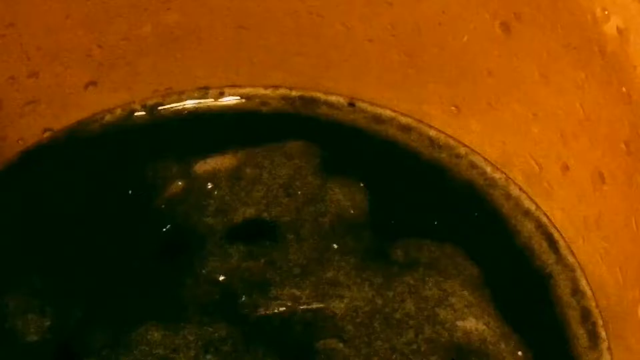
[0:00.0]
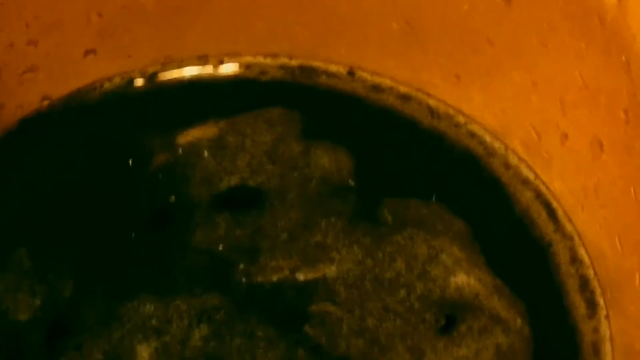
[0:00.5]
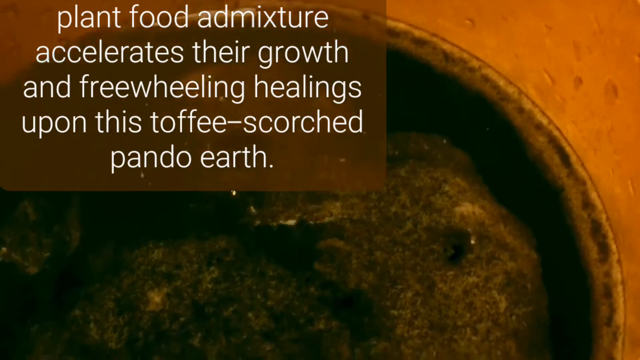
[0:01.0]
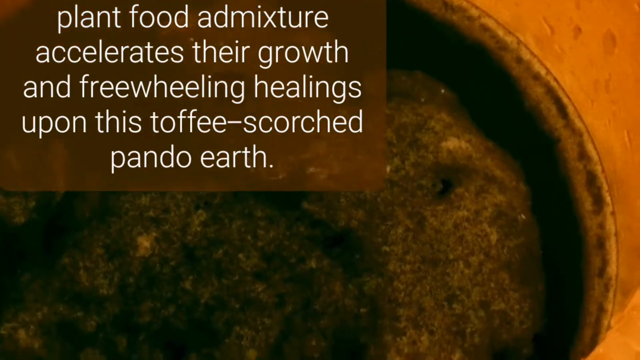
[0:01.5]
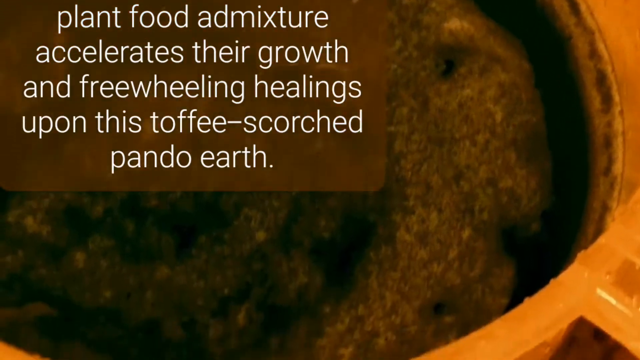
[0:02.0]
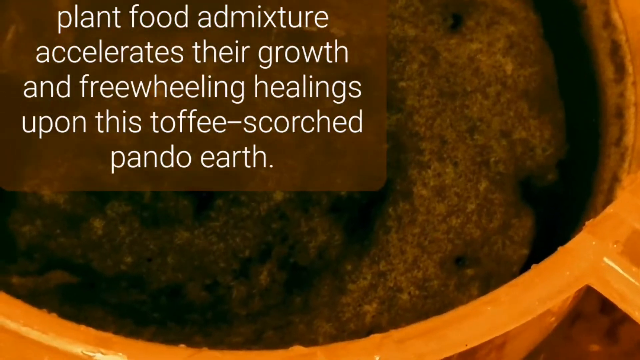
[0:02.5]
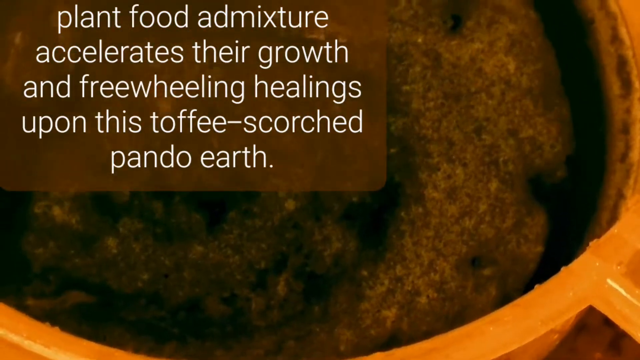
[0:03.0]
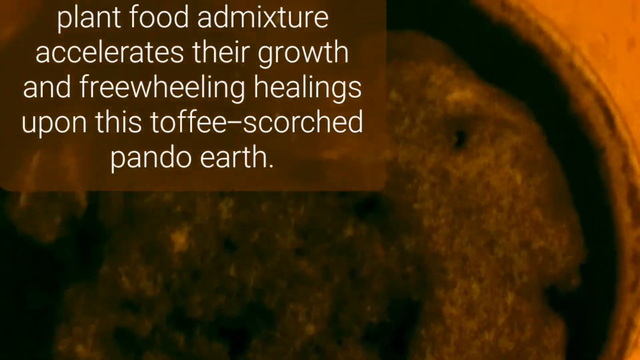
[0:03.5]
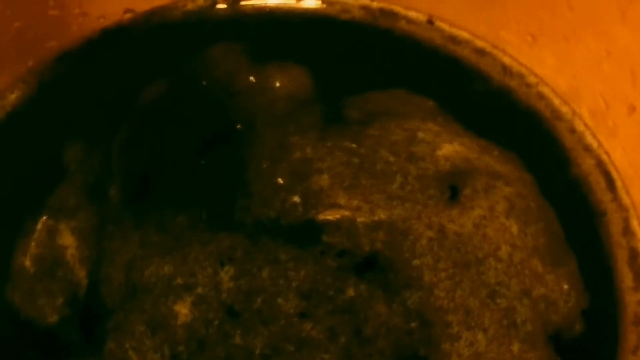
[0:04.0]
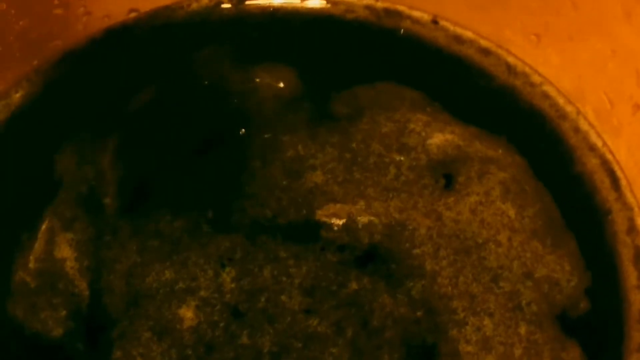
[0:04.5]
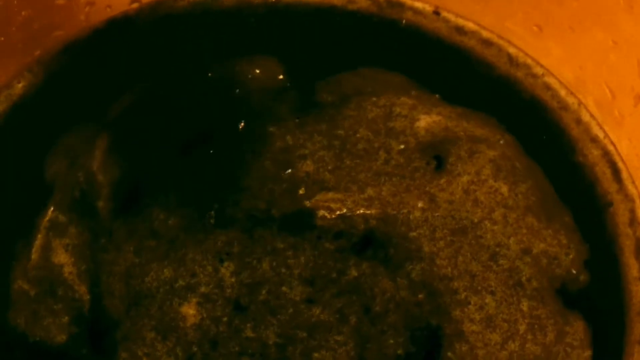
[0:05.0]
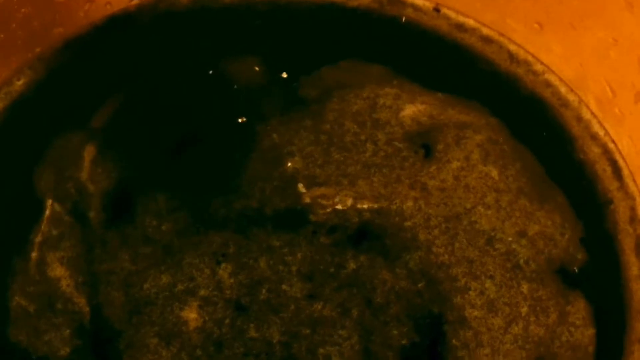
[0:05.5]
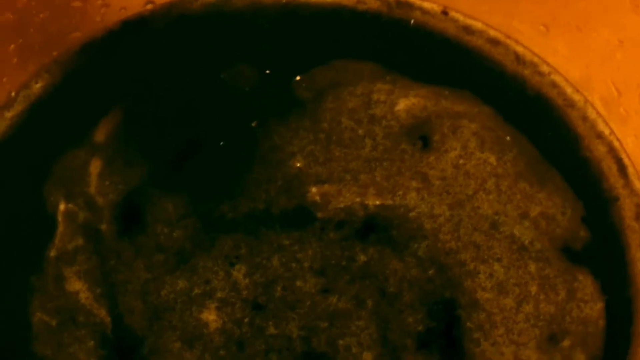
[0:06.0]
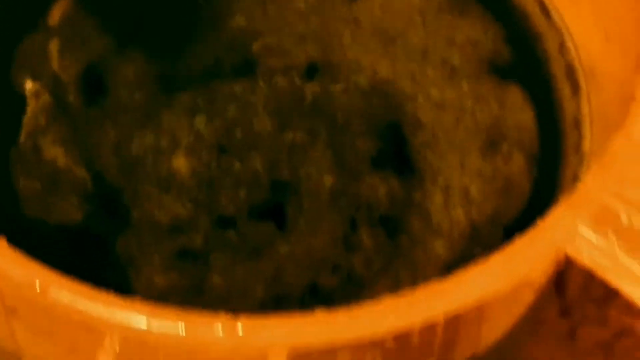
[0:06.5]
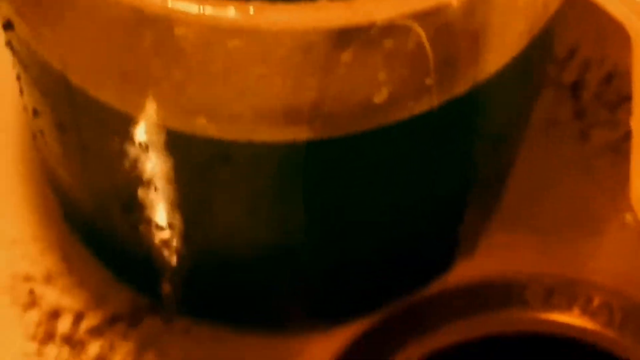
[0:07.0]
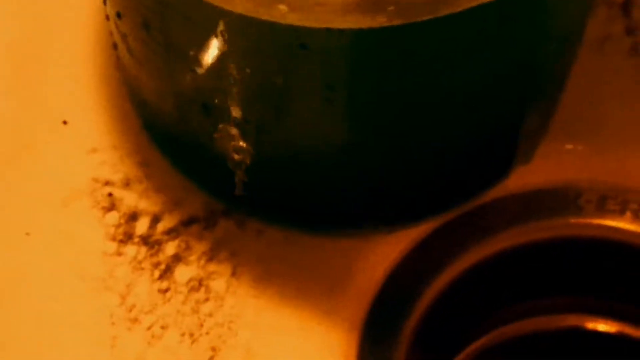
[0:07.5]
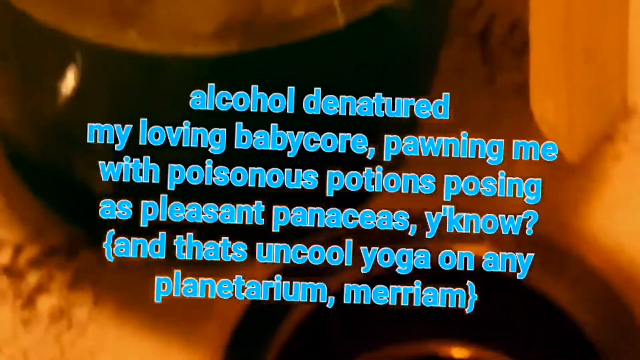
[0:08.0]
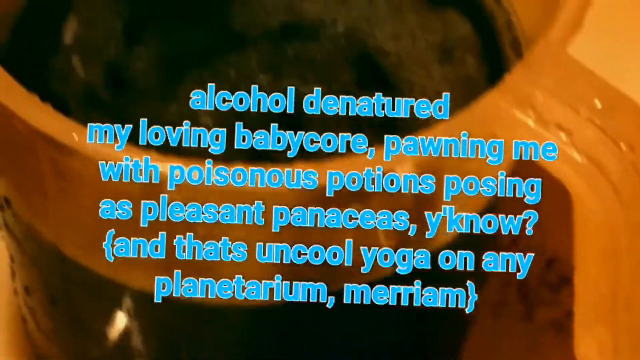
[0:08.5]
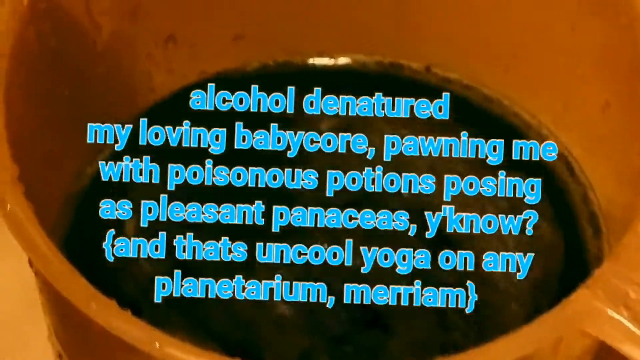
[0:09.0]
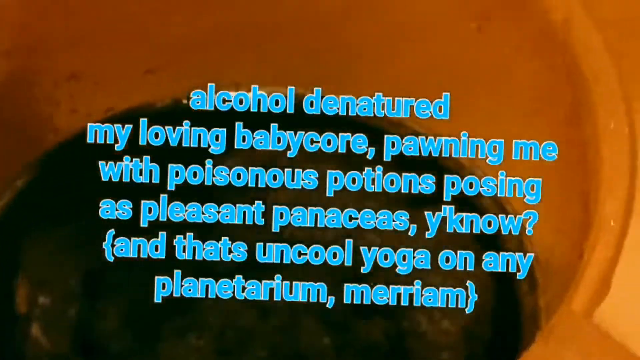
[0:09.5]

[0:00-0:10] The image starts extremely zoomed in, with the bottom third appearing to be a tea of some kind and an orange background filling the rest of the screen. The view moves down to show a still zoomed-in but clearer image of the tea, which looks to be strong tea leaves or roots, or a gloopy tea of some kind, very thick in the cup. A caption in a brown box with white text comes on in the top left corner, reading "plant food admixture accelerates their growth and freewheeling healings upon this toffee-scorched pando-earth." The tea appears to be moving, slowly swirling around, and the image pulls down to show the mug, then moves back up to show the tea.